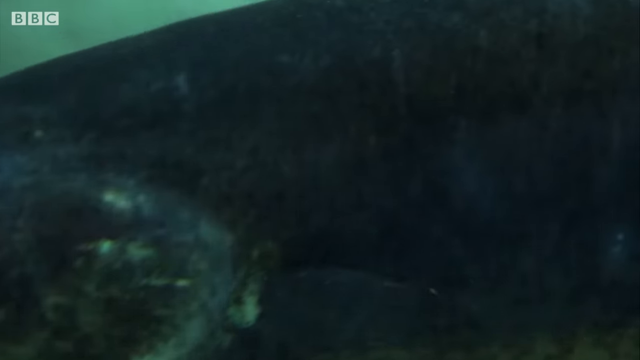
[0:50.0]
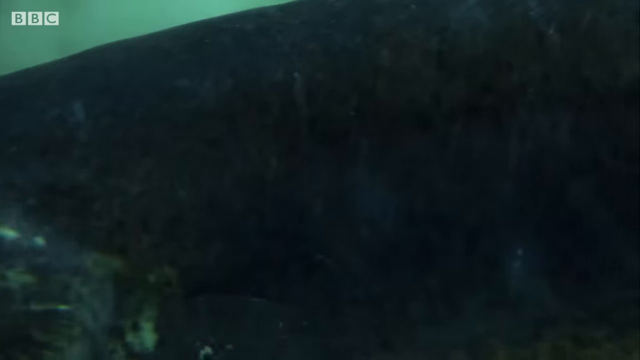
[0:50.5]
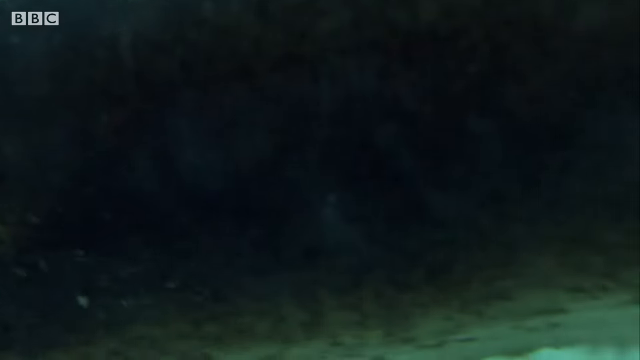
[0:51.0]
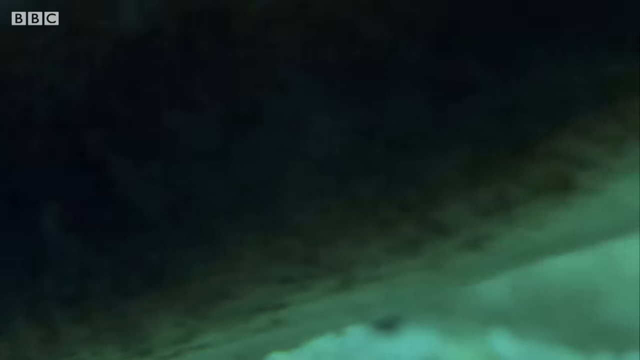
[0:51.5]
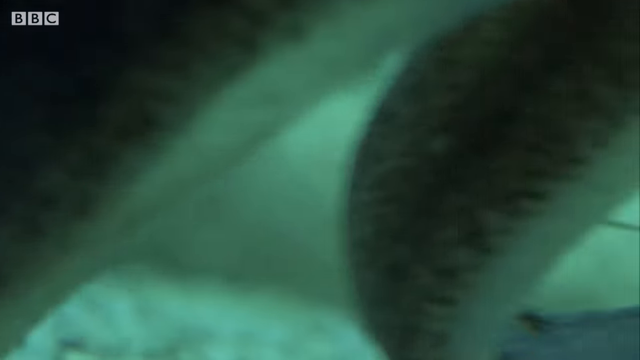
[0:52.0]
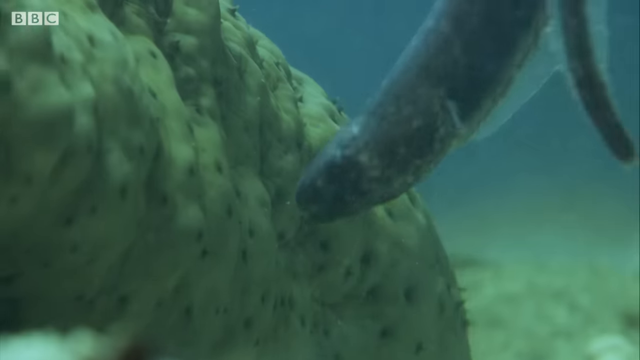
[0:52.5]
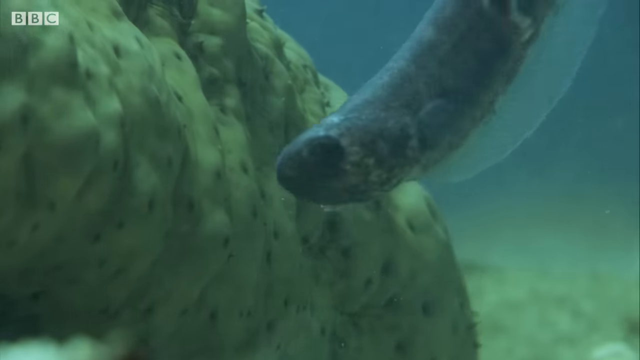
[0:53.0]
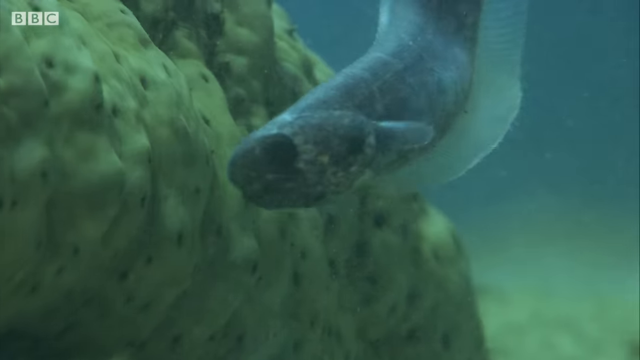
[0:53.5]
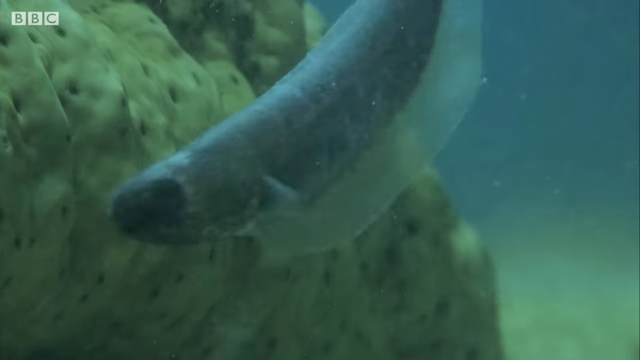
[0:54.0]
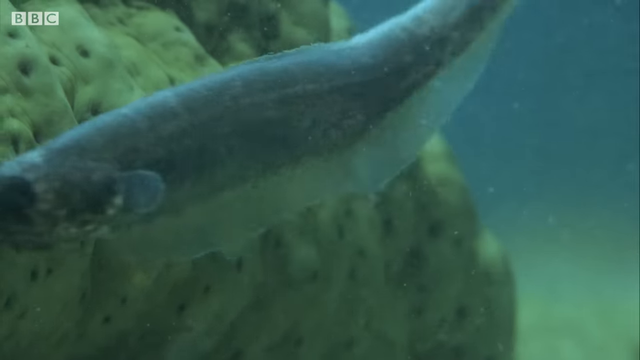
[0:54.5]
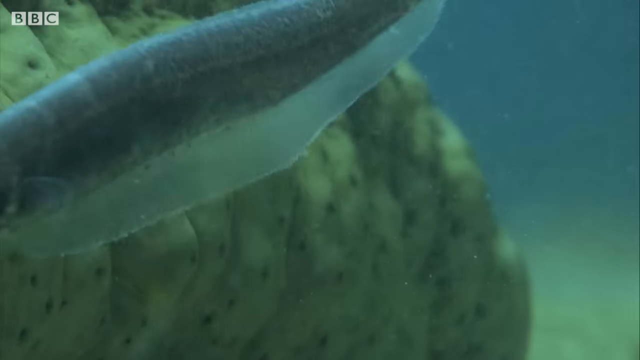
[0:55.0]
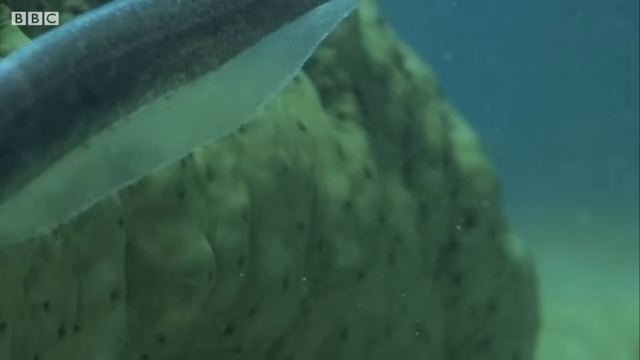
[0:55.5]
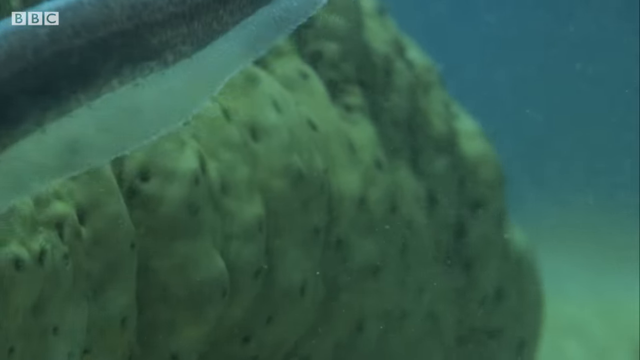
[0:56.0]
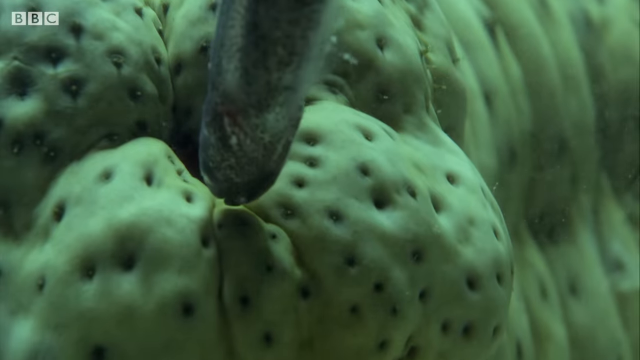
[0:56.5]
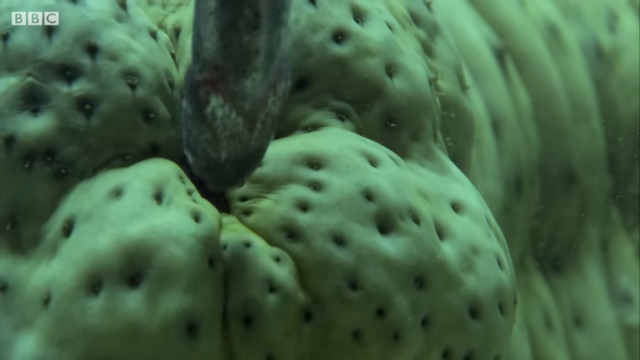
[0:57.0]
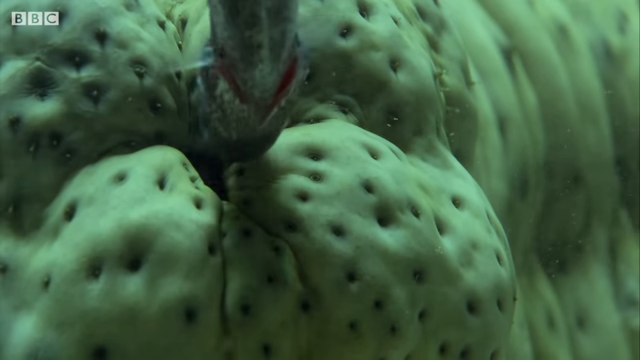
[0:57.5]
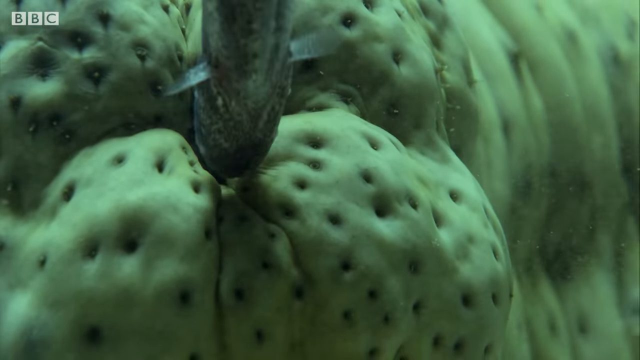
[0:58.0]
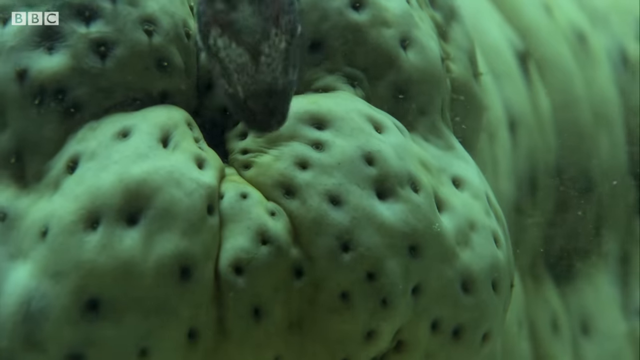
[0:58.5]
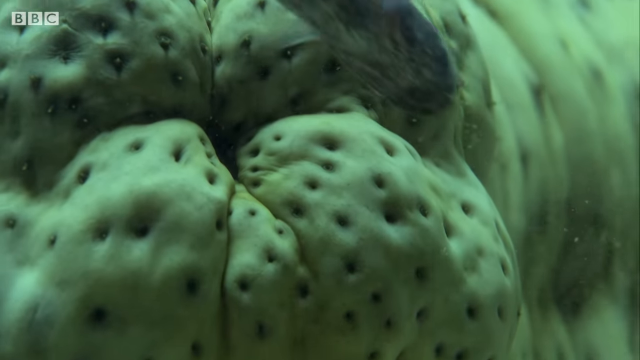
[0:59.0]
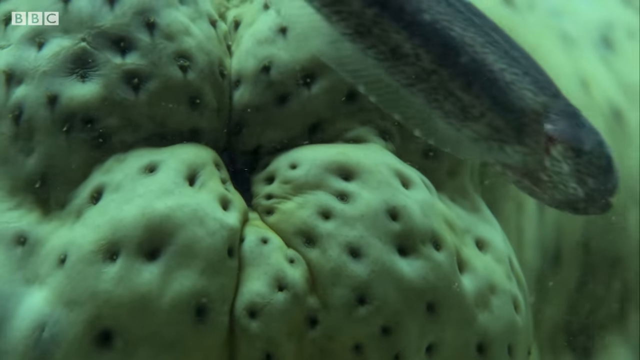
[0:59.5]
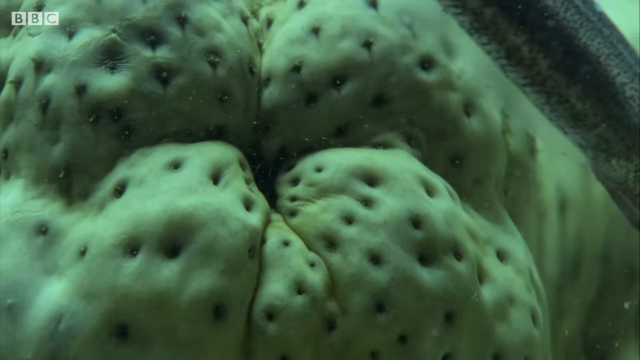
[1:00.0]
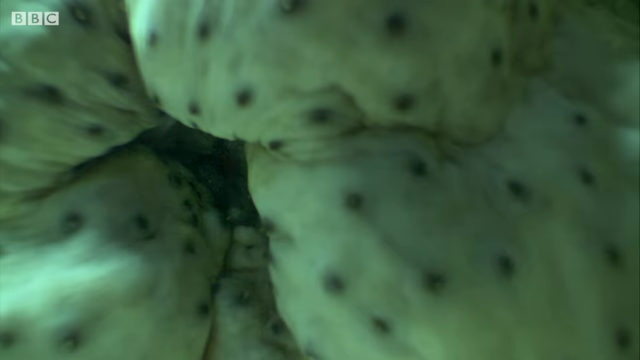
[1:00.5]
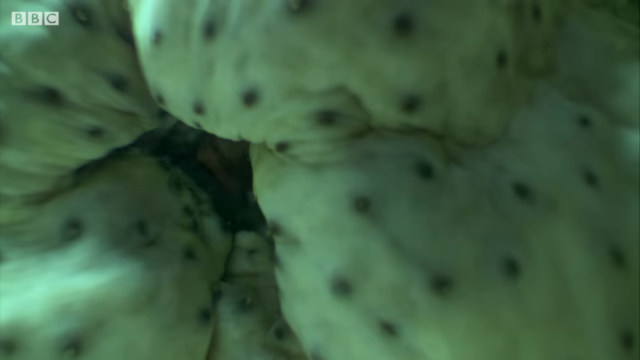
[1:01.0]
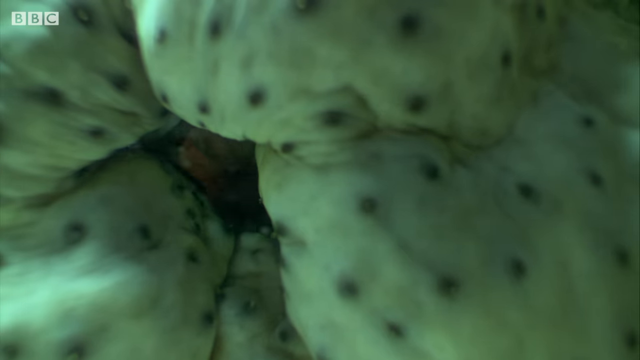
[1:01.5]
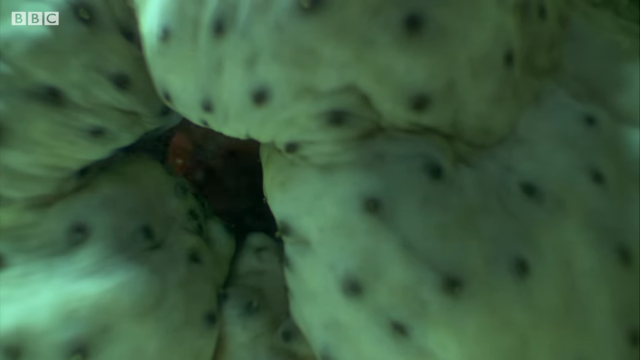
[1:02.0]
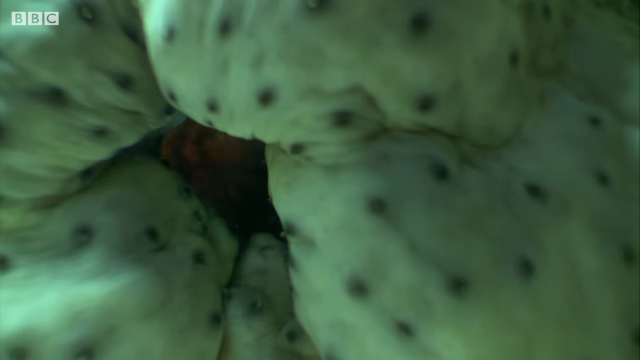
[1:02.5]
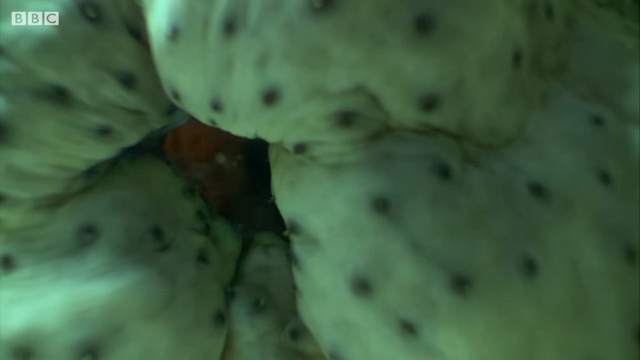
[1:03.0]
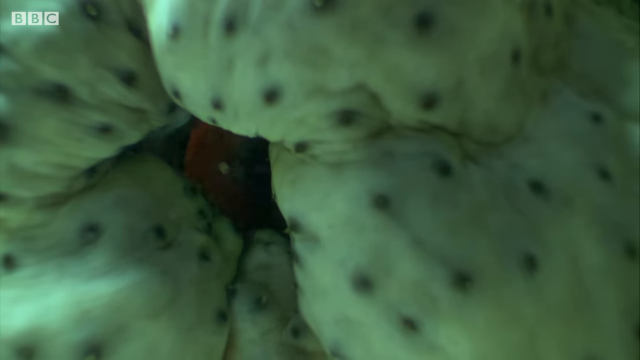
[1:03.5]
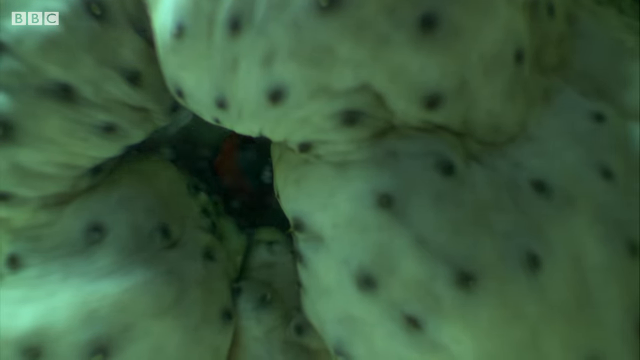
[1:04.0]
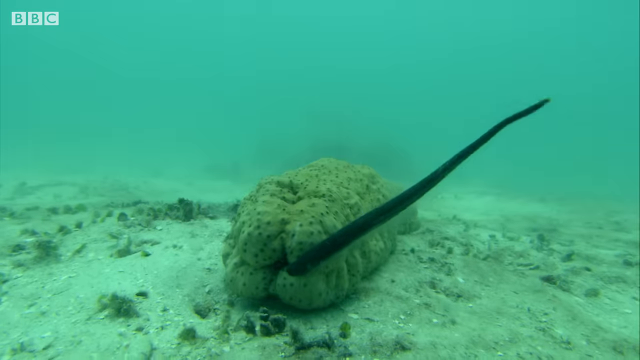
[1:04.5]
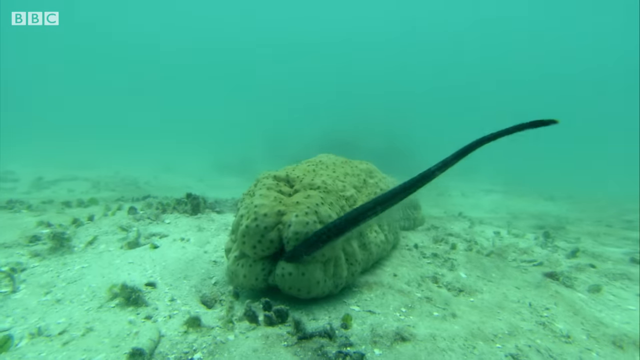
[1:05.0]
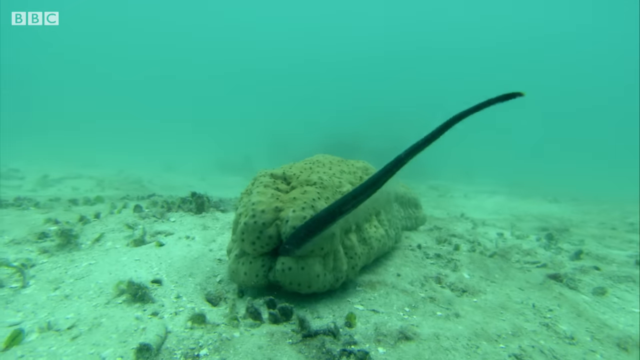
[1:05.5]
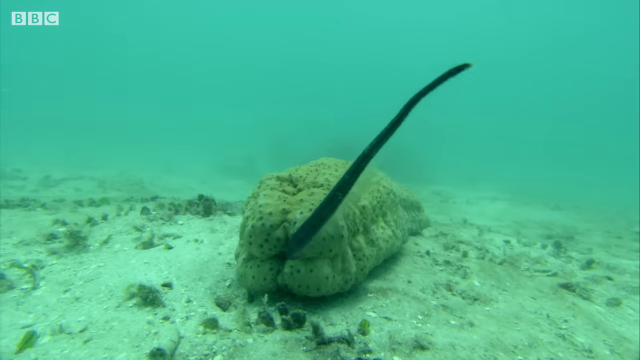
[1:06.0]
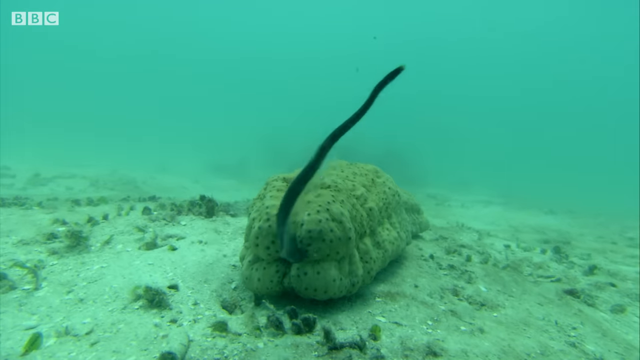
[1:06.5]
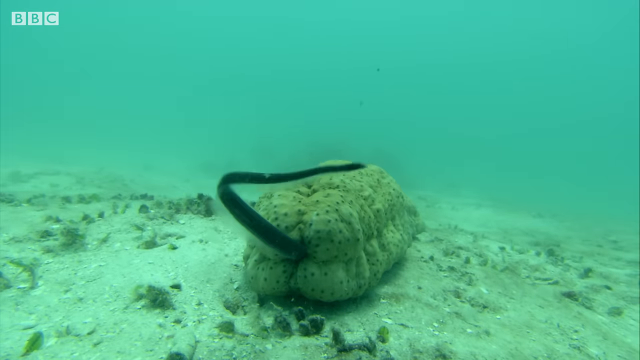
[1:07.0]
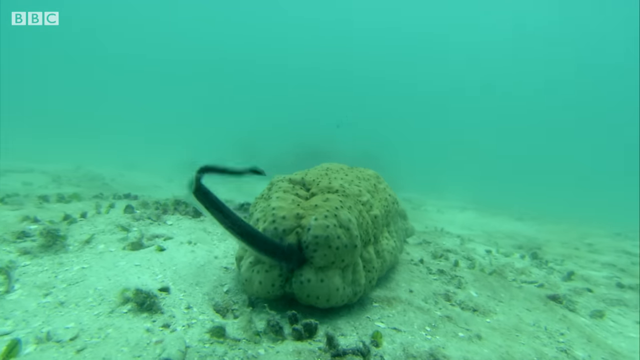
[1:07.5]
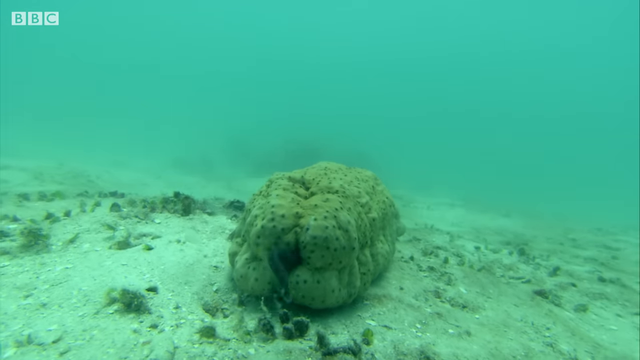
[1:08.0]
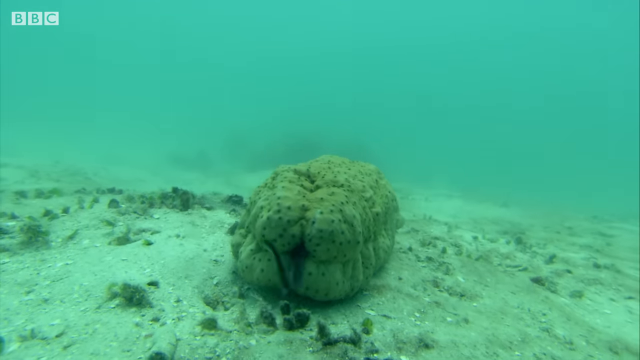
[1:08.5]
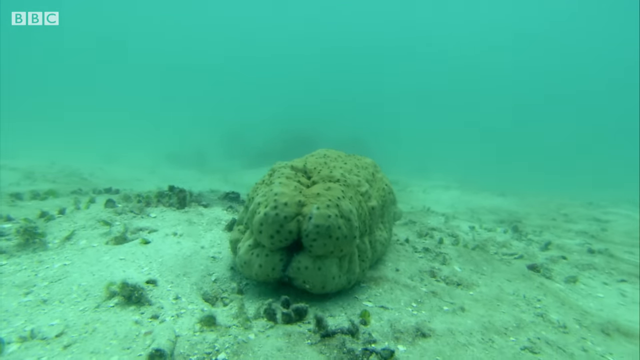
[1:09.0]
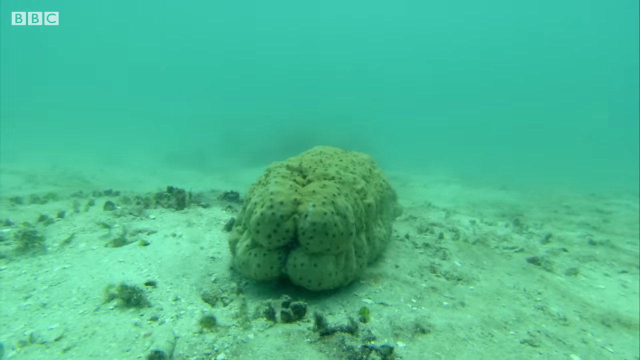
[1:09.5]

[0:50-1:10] The eel is up against the animal and appears to be trying to get inside it, apparently going into what might be the animal's mouth to hide, forcing or squeezing its way in. The setting is the same murky water, and they are still on the sandy bottom. Instead of going under the animal this time, the eel goes into the hole.